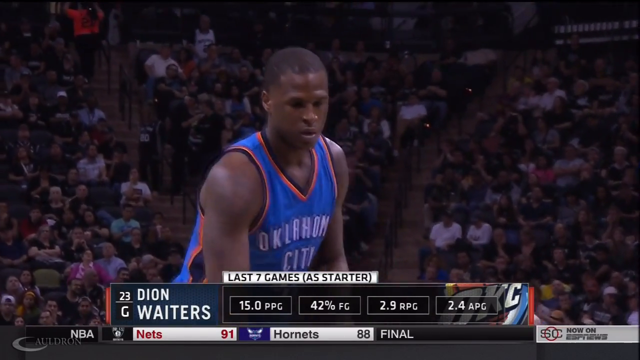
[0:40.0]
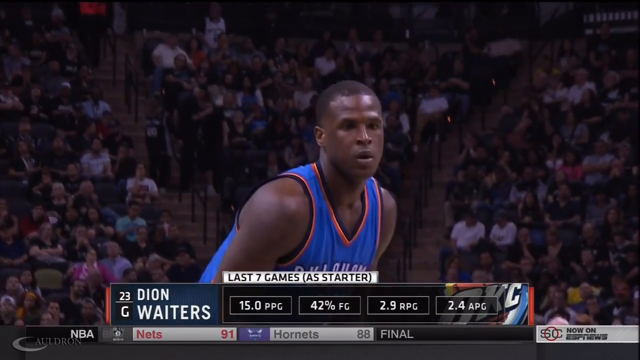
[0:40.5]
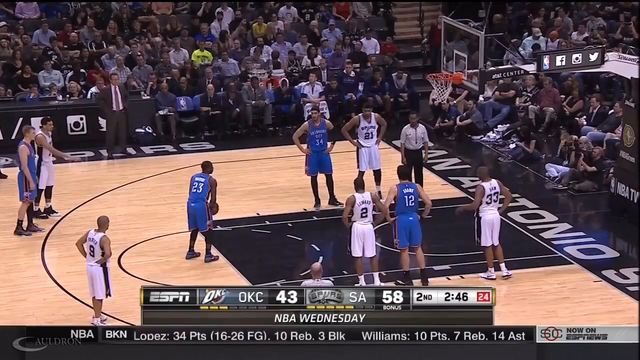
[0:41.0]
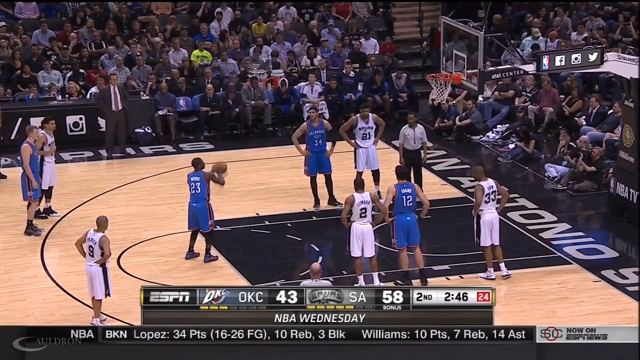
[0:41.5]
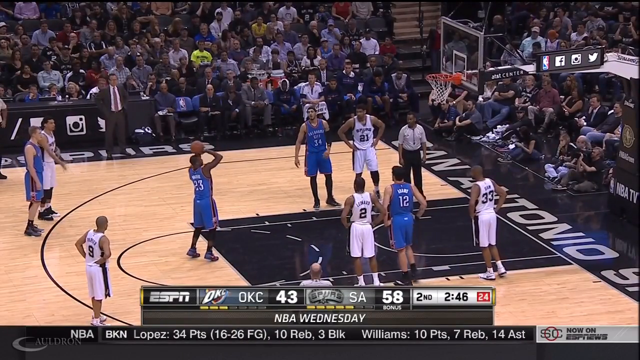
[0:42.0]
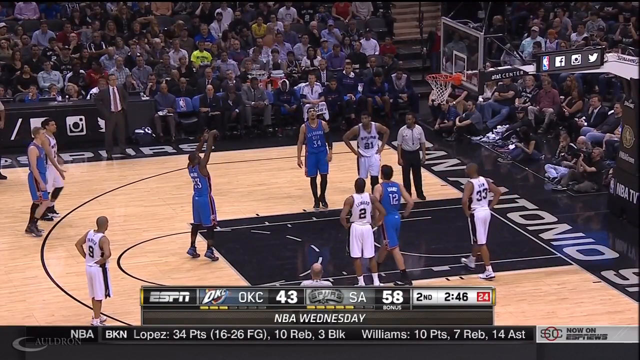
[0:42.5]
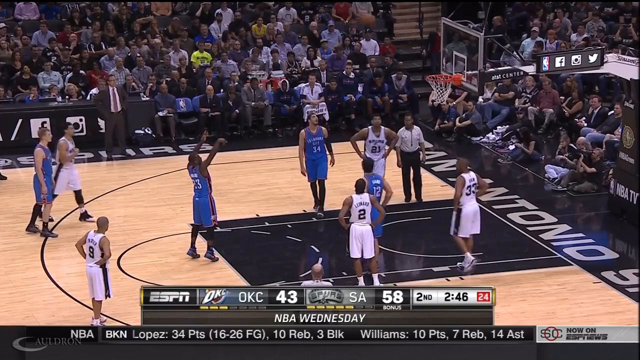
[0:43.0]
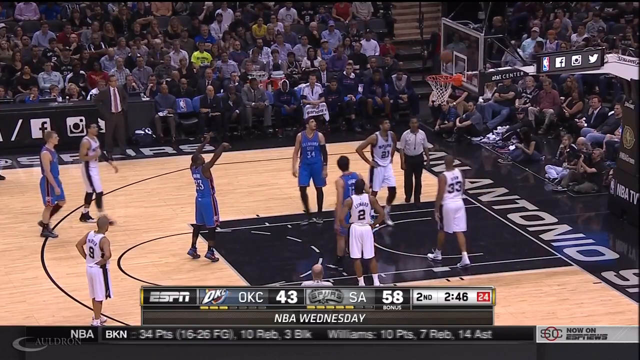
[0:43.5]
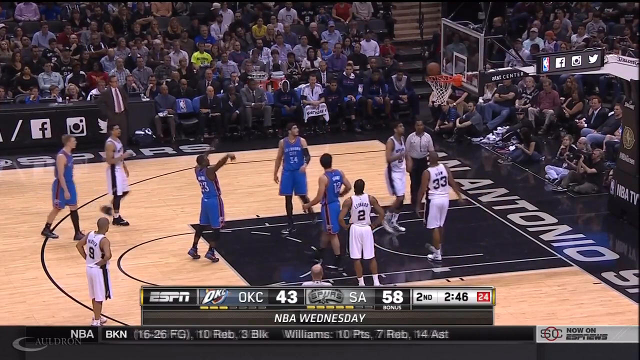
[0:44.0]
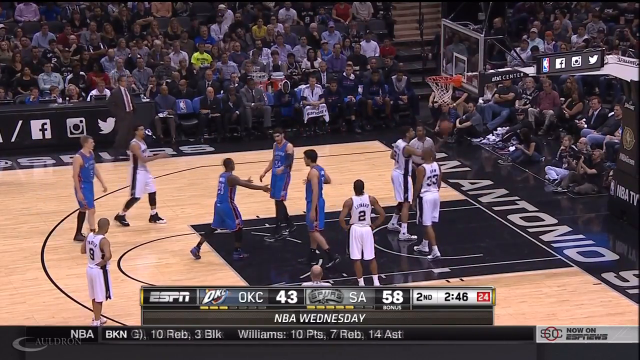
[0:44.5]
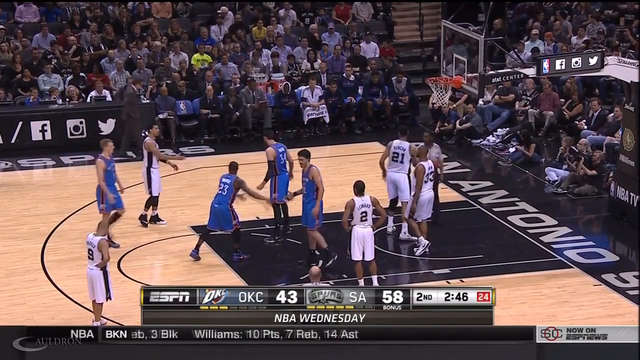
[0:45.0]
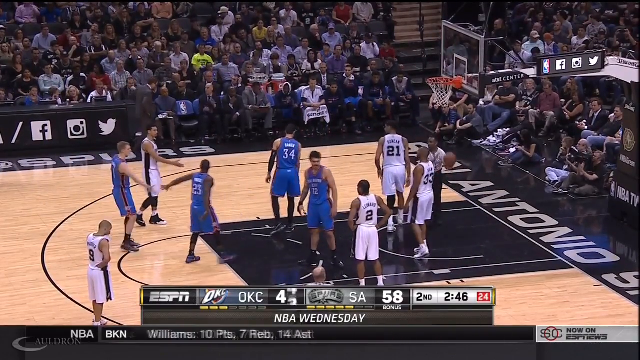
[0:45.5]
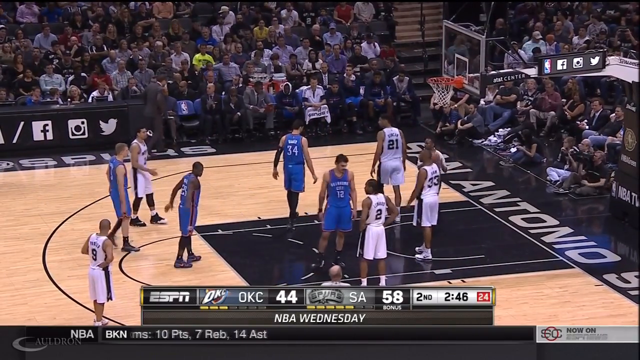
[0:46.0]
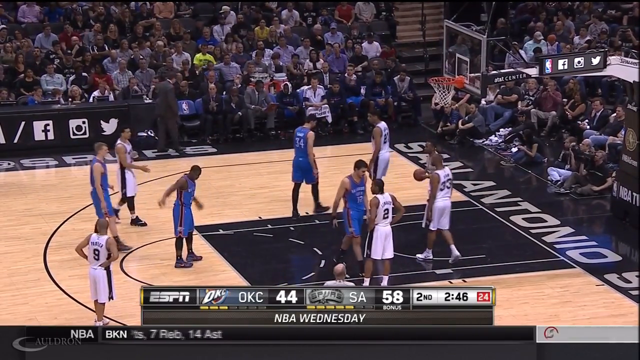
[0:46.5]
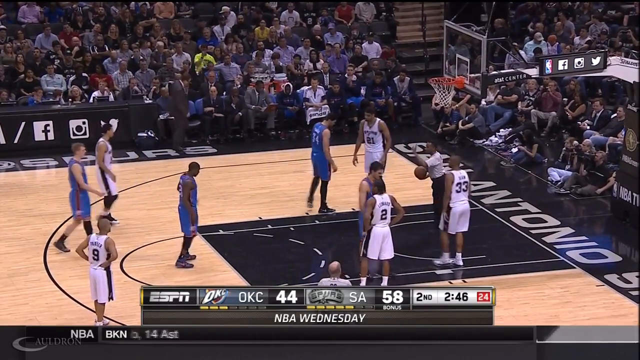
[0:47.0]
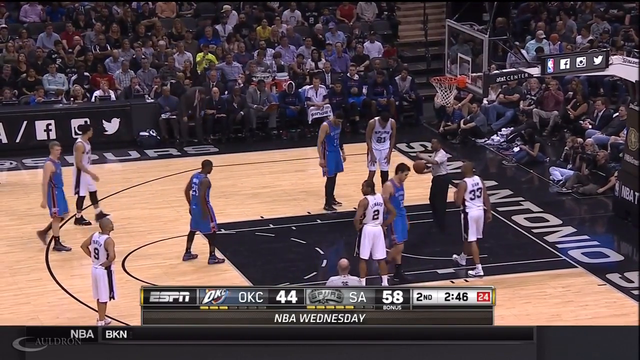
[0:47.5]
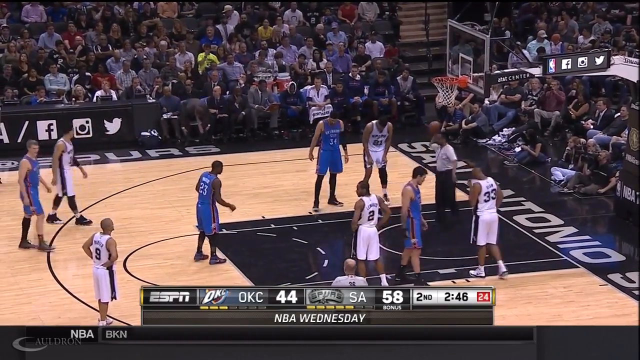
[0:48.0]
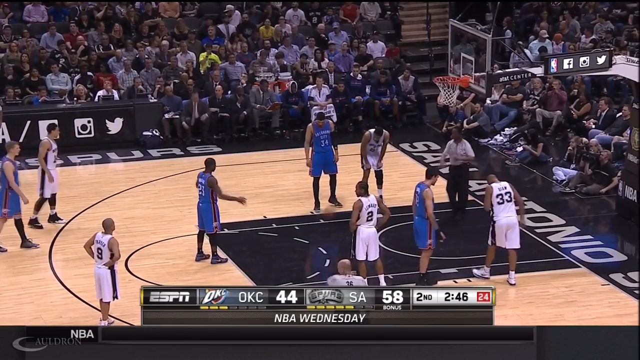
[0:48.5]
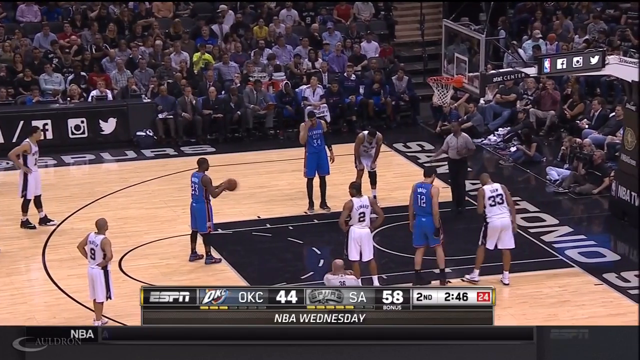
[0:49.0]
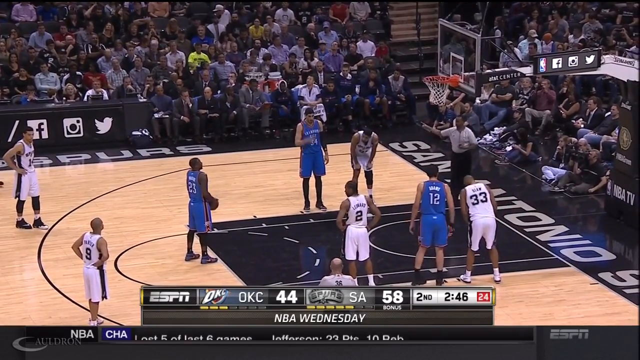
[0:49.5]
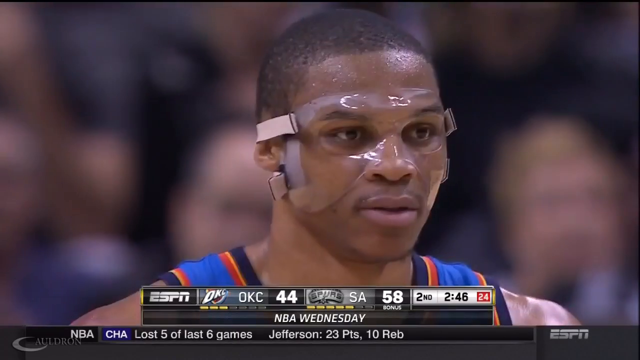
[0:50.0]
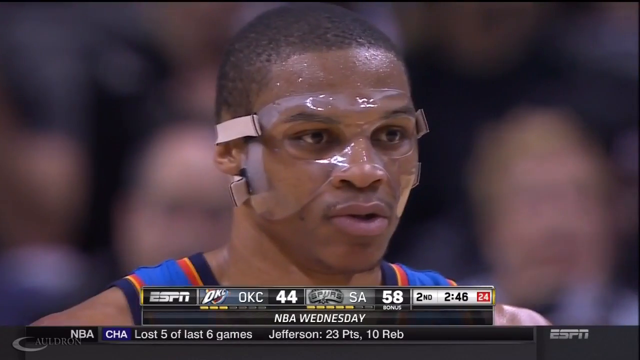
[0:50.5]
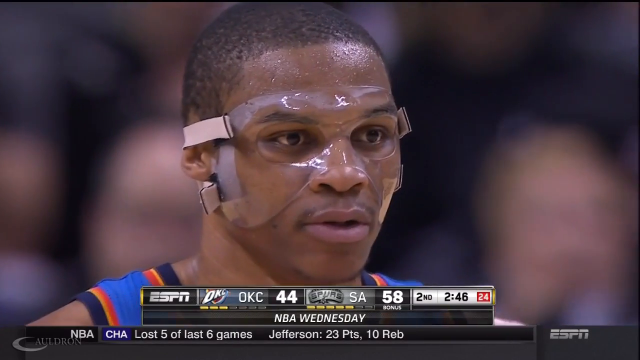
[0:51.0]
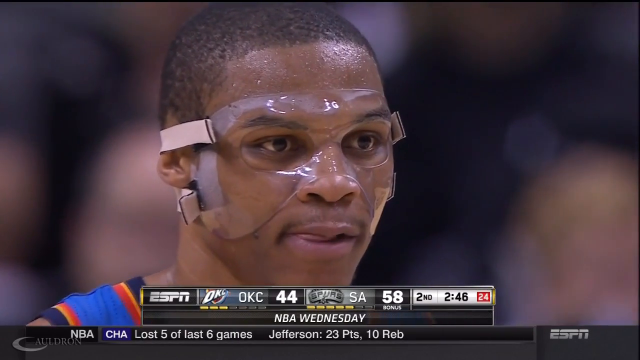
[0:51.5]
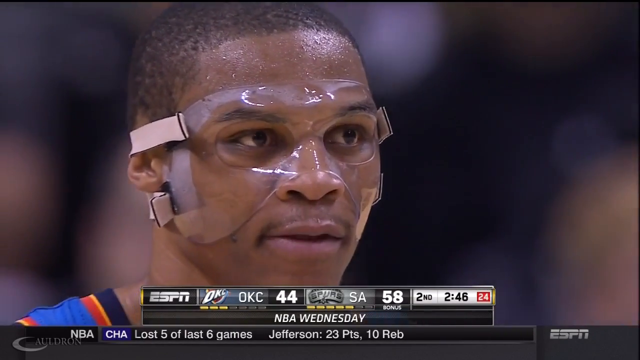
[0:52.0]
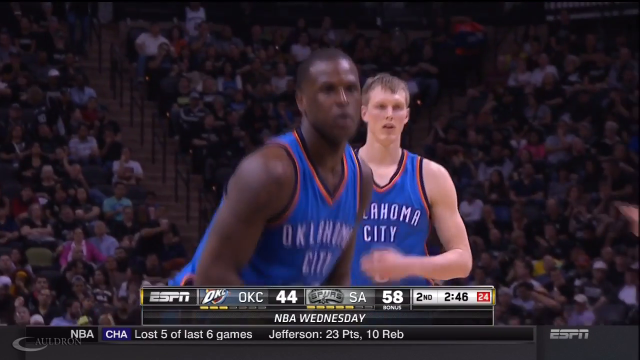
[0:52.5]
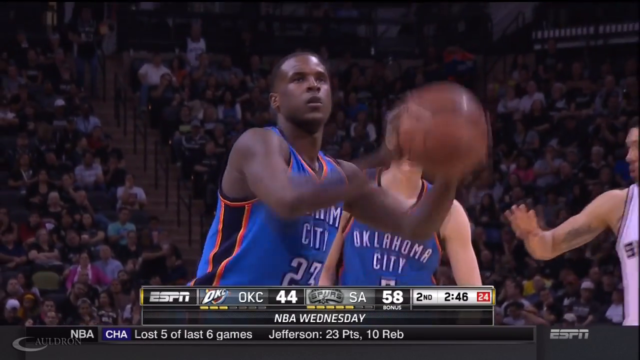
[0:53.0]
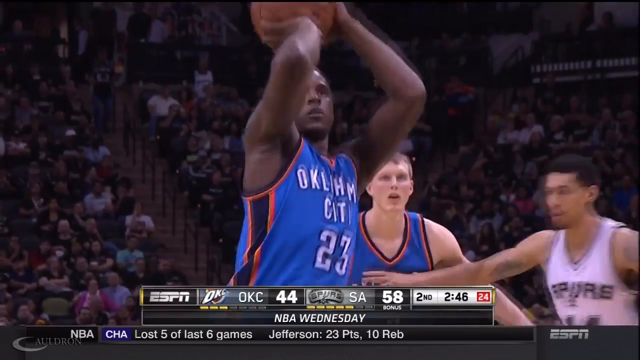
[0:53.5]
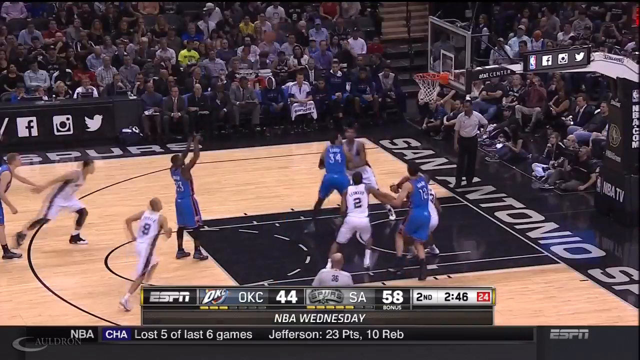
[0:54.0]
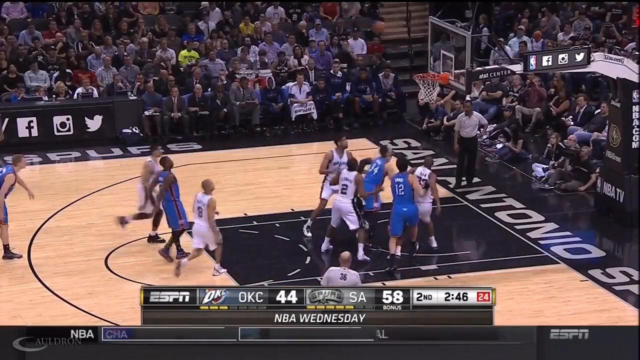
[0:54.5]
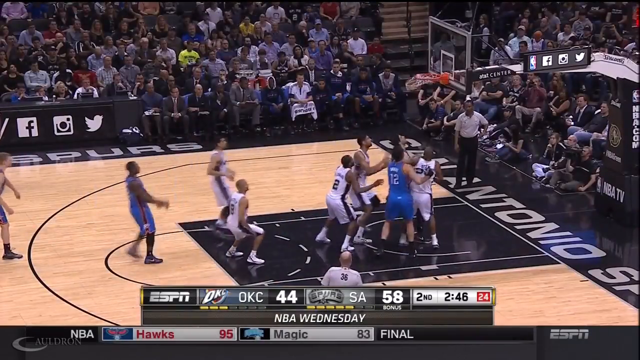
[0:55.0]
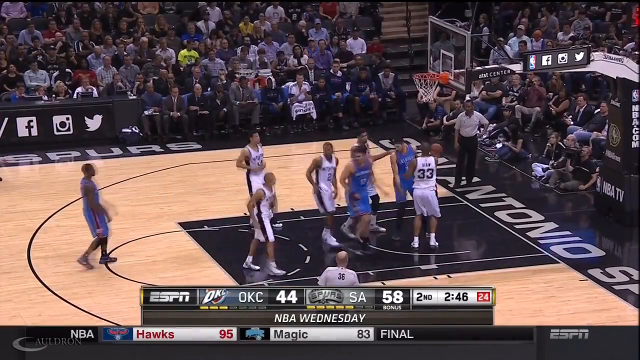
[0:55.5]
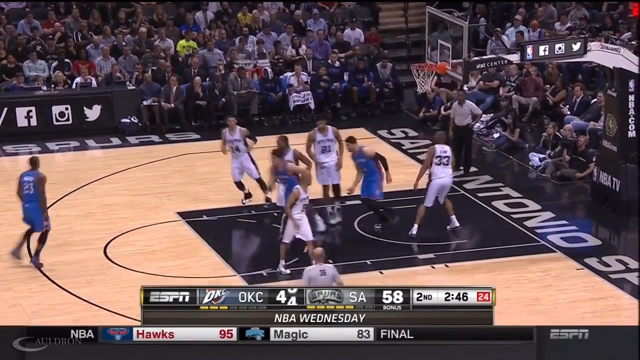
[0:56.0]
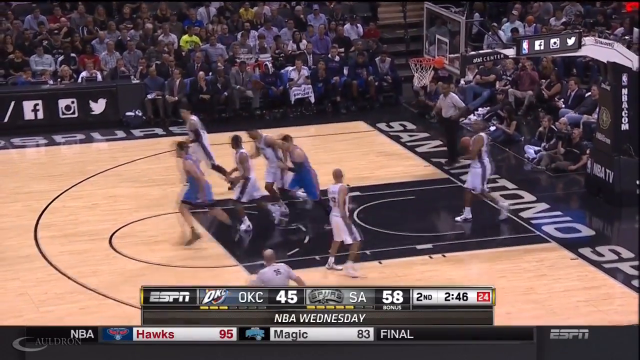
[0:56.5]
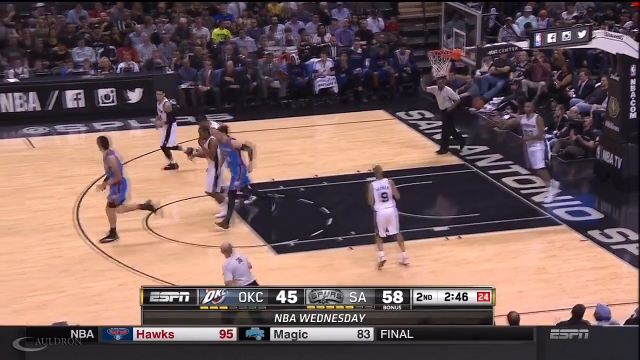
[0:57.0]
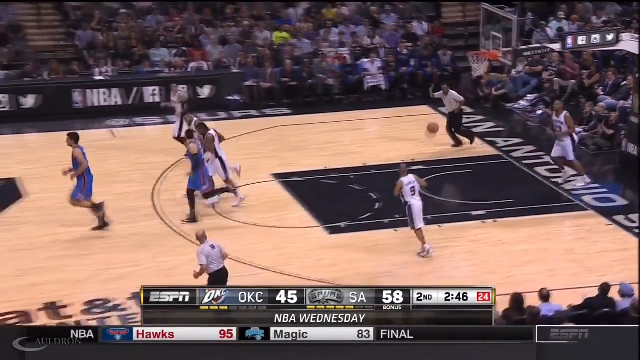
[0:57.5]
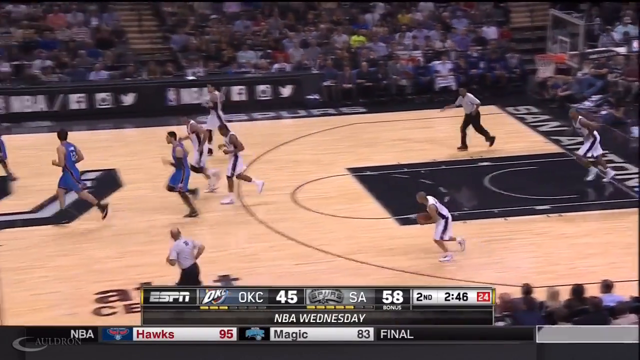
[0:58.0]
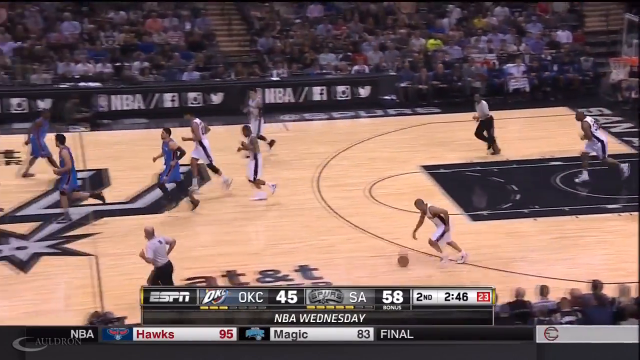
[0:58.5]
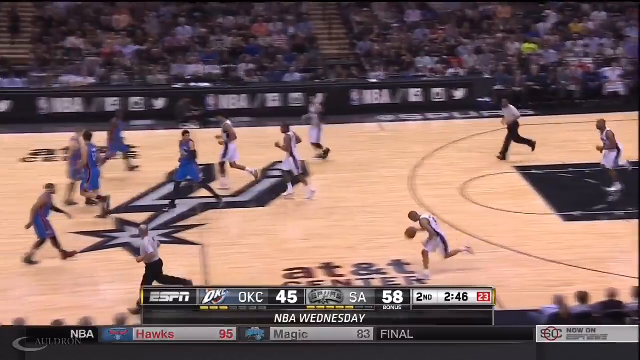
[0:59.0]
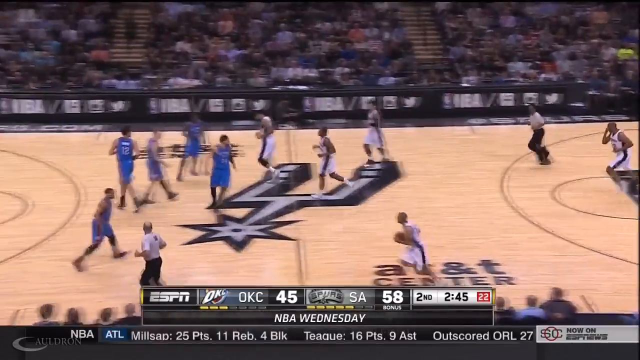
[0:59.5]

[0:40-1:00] In a wide-angle shot of the game in progress, one of the blue players takes a shot at the hoop and the ball goes in. The audience's reaction is not dramatic, though a few people are seen clapping. The scoreboard updates the blue team from 44 points to 45. A close-up on screen reveals the player's name as "Dion Waiters", and some stats from his last seven games appear. The other team's players react minimally, and there is not much celebration; the players appear to quietly continue with the game, focused on what they are doing, as does the audience. The players' movements look natural and in proportion.